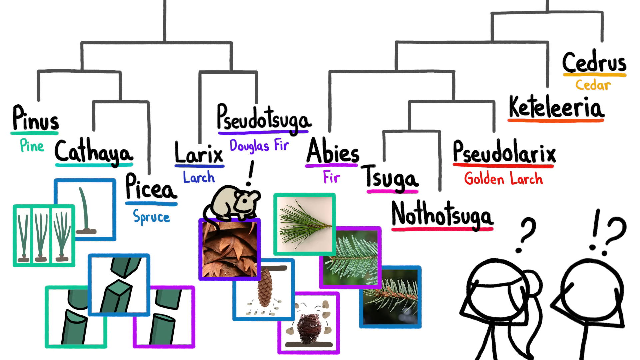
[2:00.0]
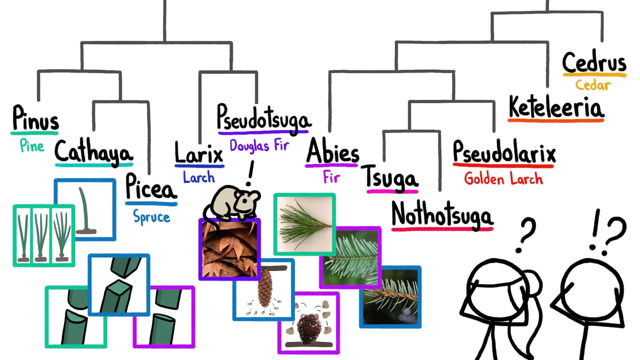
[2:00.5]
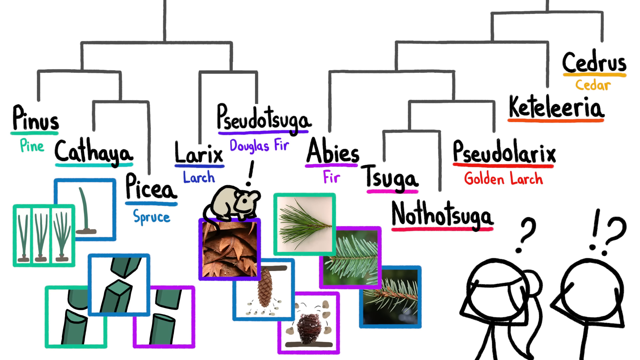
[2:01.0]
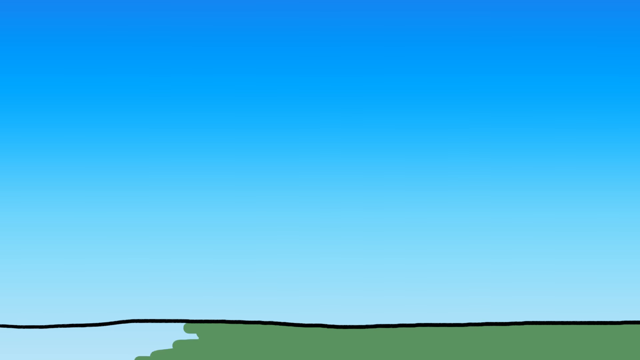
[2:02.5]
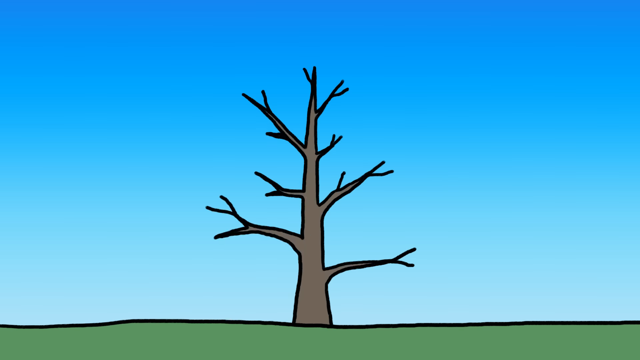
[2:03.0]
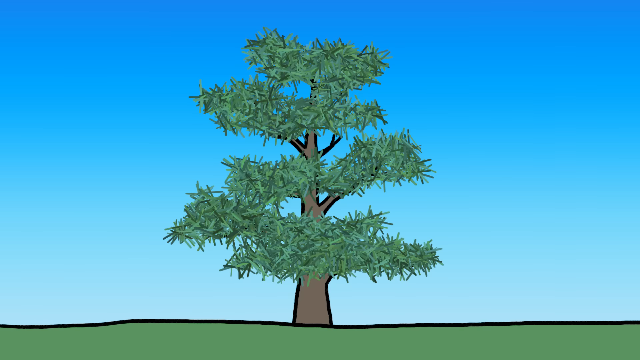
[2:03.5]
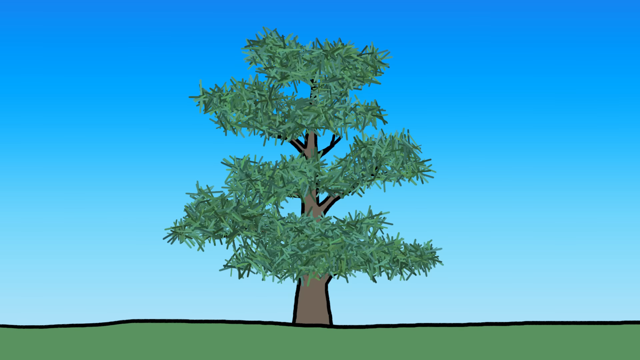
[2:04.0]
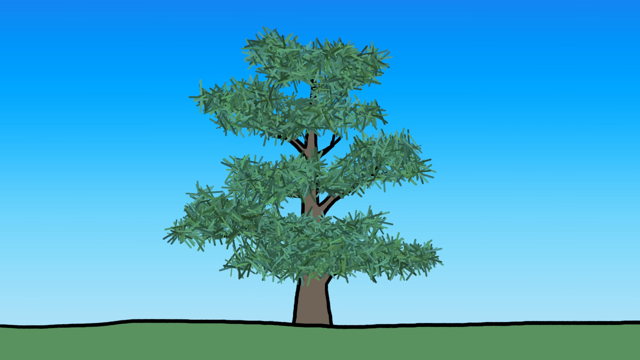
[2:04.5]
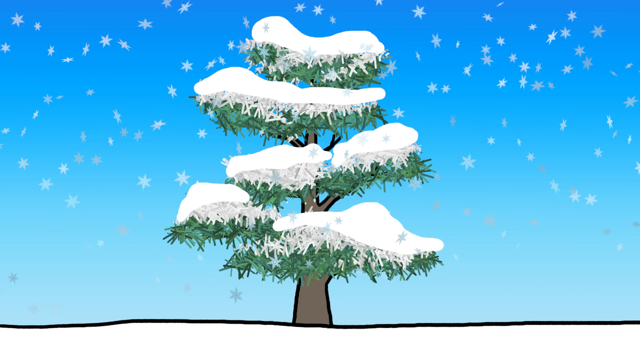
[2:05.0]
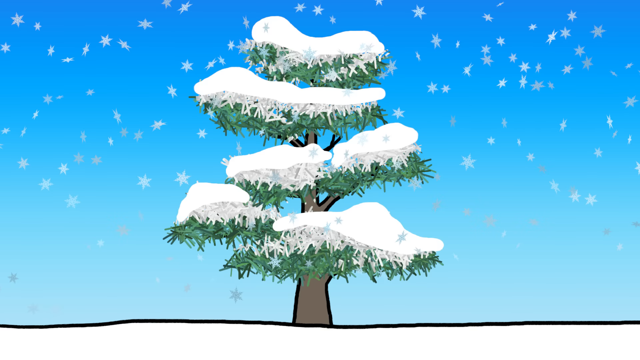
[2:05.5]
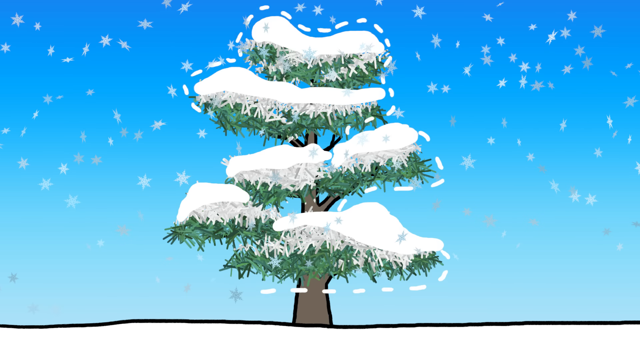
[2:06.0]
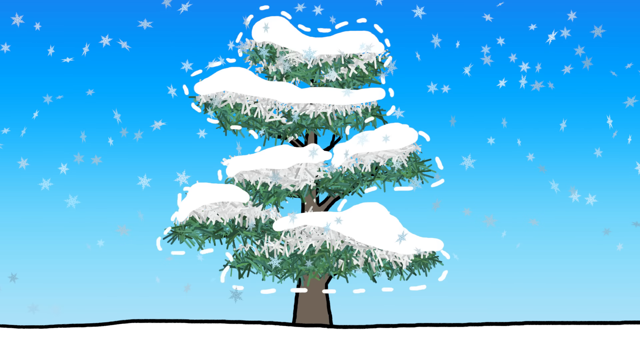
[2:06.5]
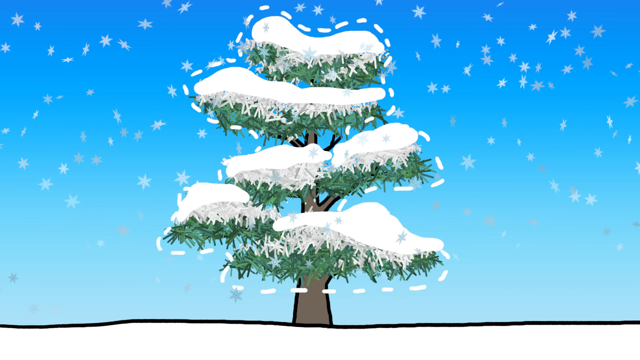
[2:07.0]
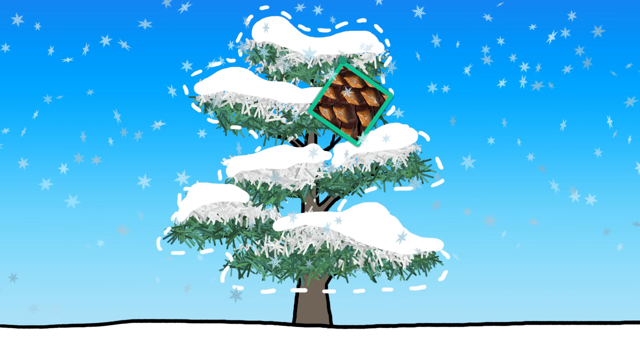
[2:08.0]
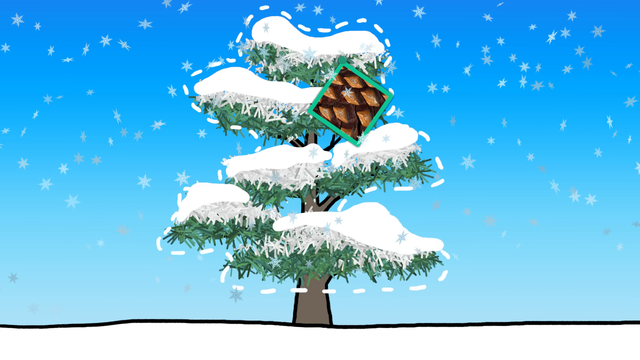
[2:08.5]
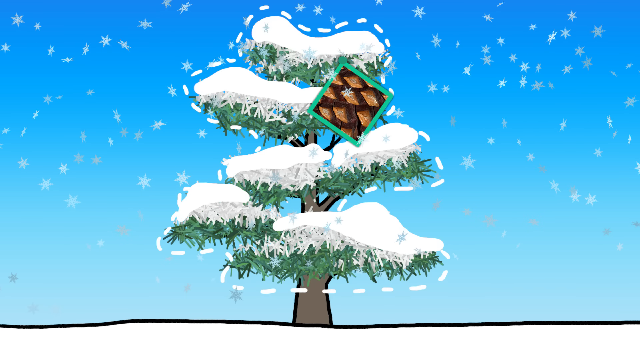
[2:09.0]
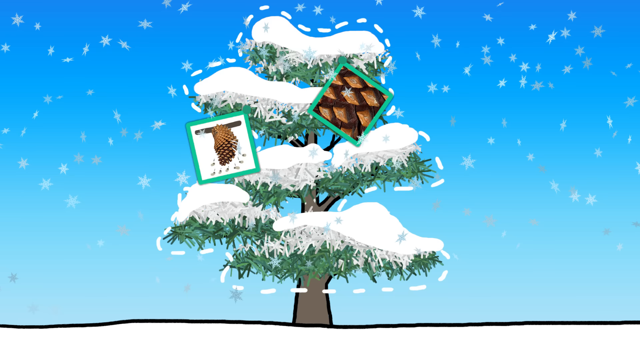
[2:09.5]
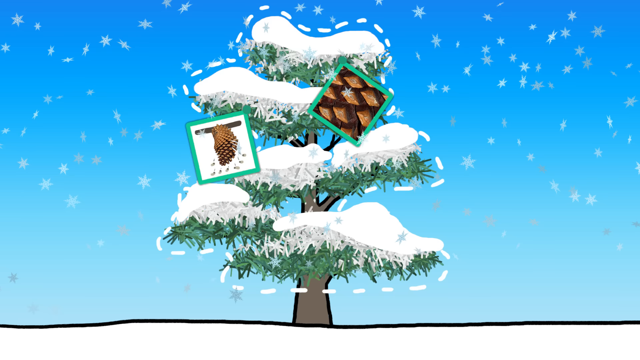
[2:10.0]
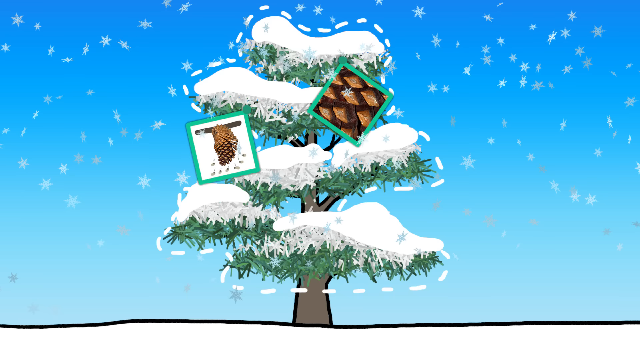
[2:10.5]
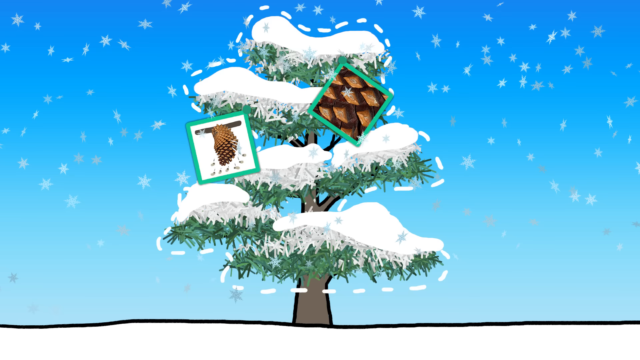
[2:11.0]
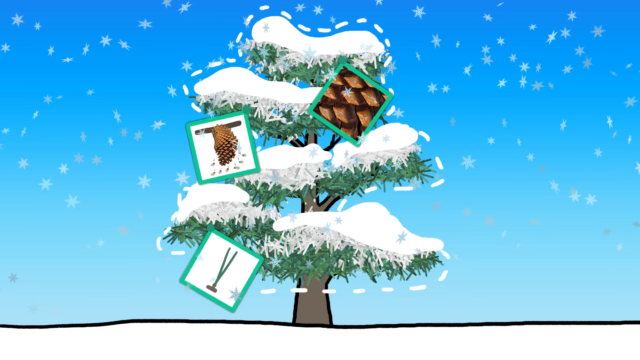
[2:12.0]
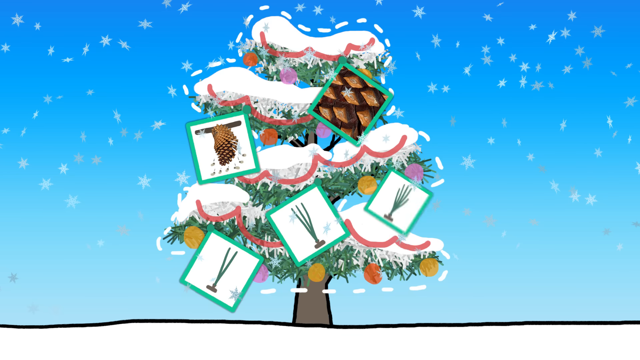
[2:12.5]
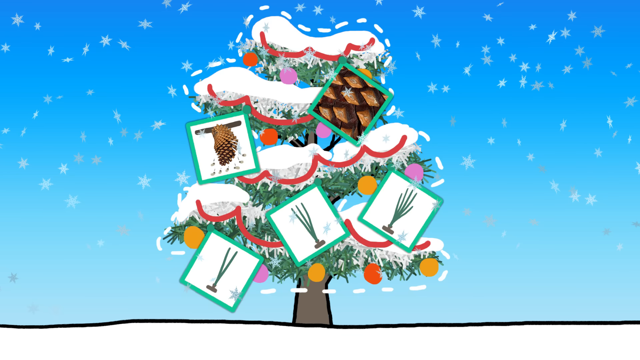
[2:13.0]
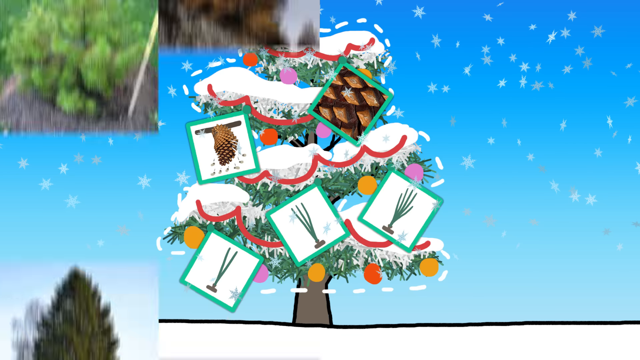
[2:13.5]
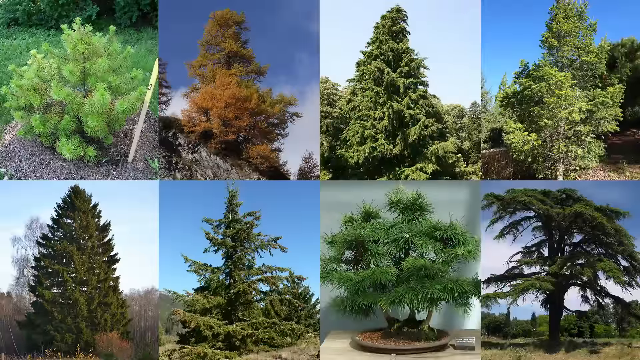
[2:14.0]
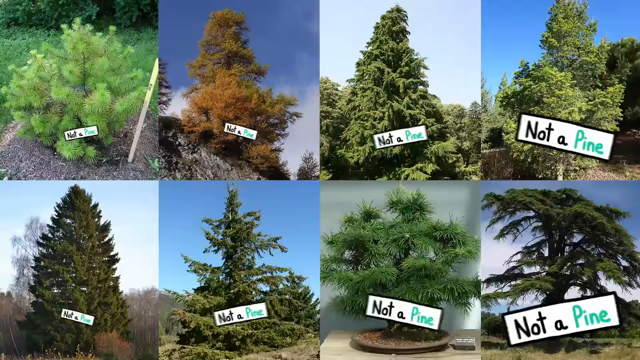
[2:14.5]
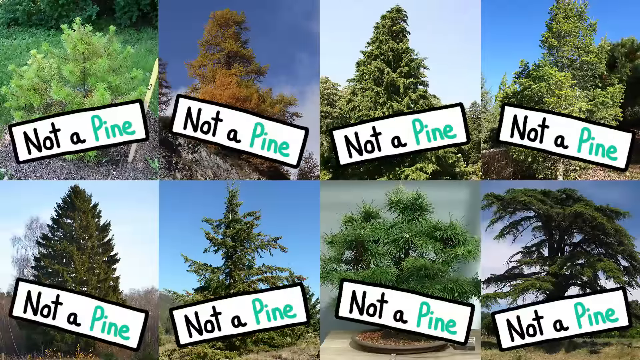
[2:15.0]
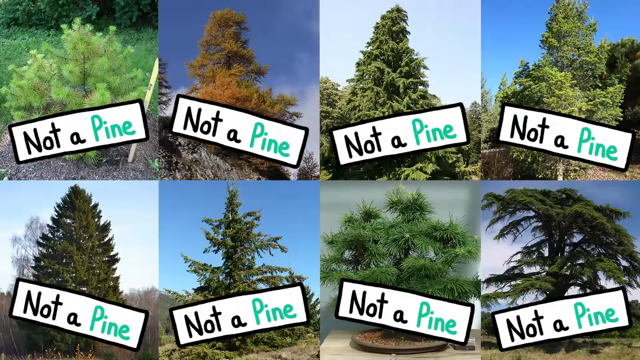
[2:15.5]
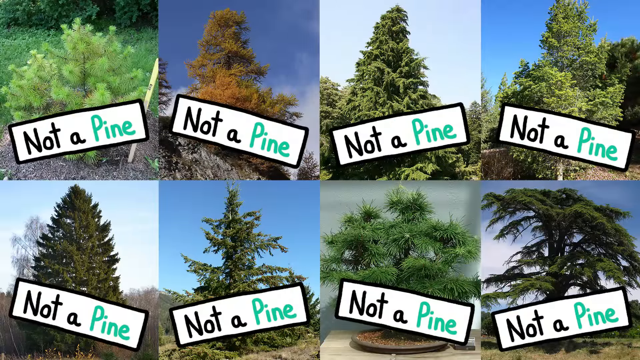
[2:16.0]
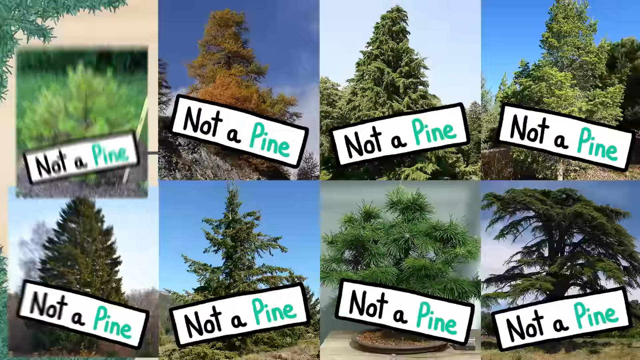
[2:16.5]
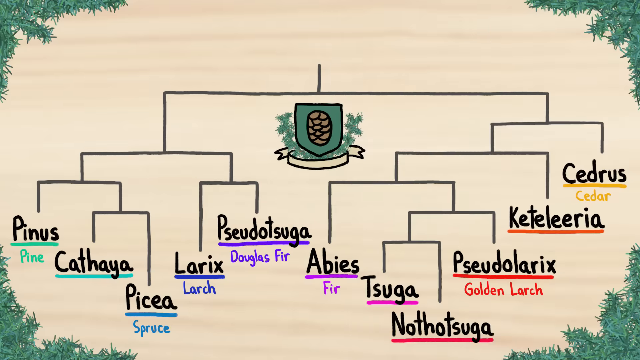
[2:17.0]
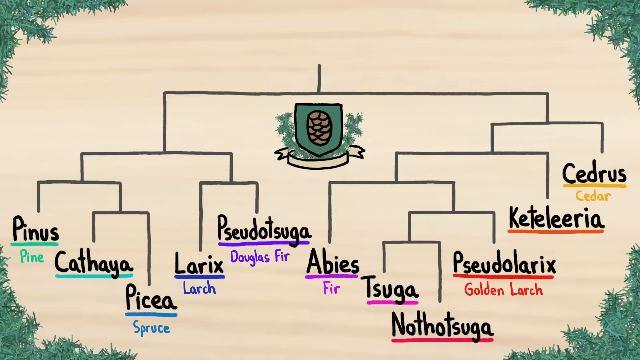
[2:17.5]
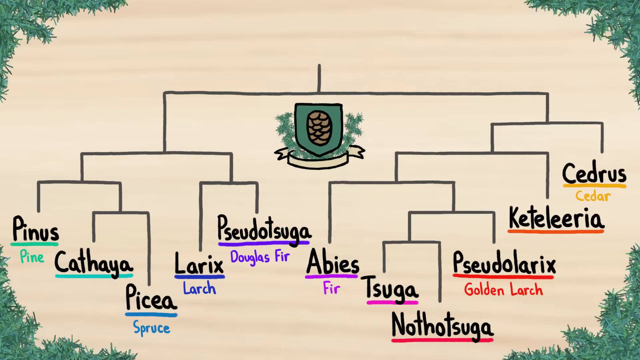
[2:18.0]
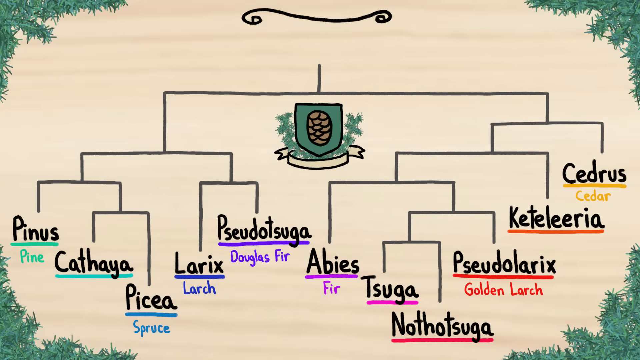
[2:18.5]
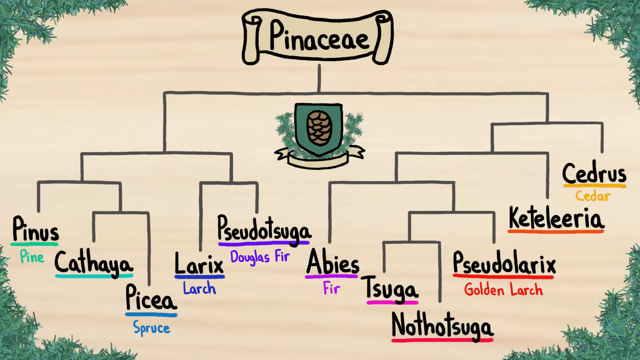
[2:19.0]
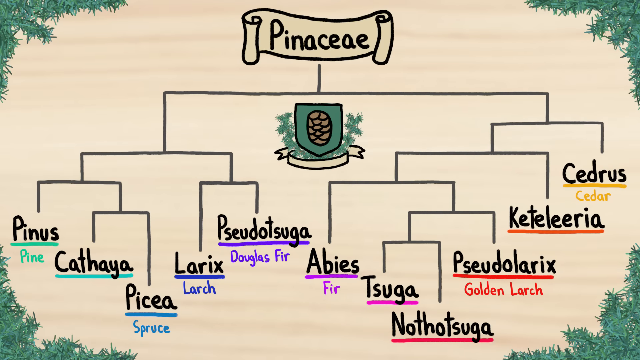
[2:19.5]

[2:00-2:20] A chart shows how the trees are connected. Pine trees, cathaya, spruce, larch and Douglas fir all branch from one side at the top, while on the right-hand side a bunch of other trees, including firs, golden larches and cedars, branch out of a different origin. Two stick figures with question marks appear, and a picture of a tree in snow is shown. Text at the very top indicates that all these trees started from an original pine tree.